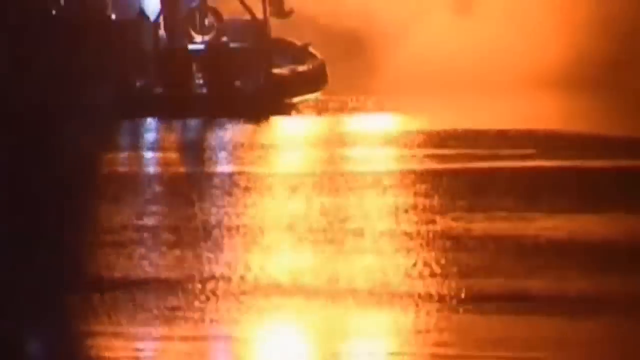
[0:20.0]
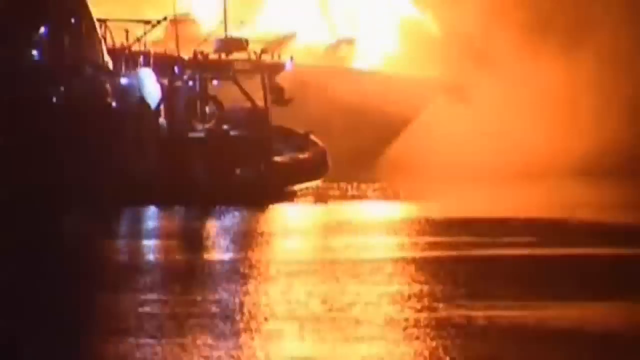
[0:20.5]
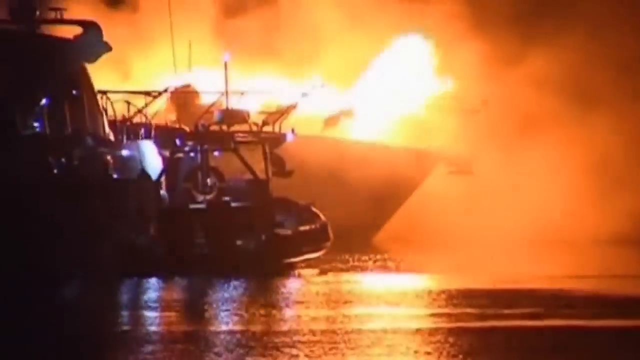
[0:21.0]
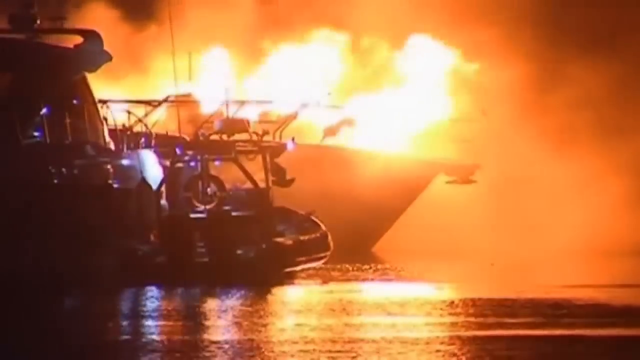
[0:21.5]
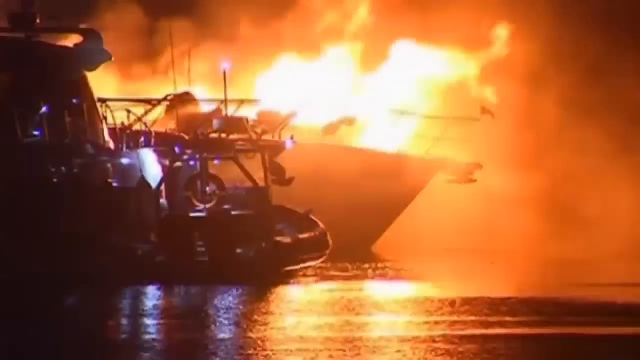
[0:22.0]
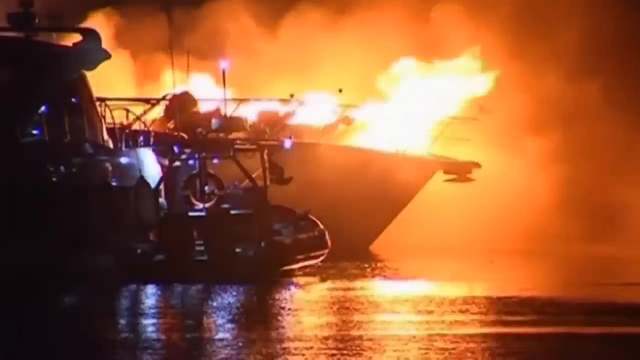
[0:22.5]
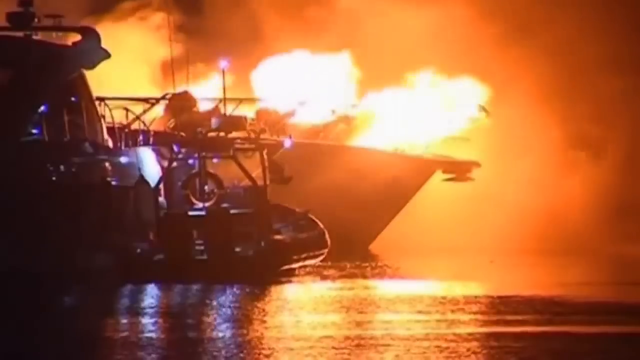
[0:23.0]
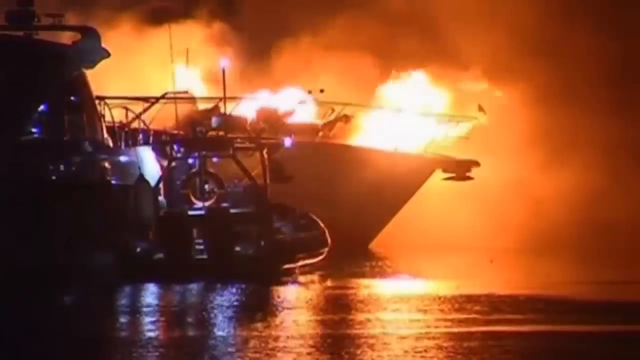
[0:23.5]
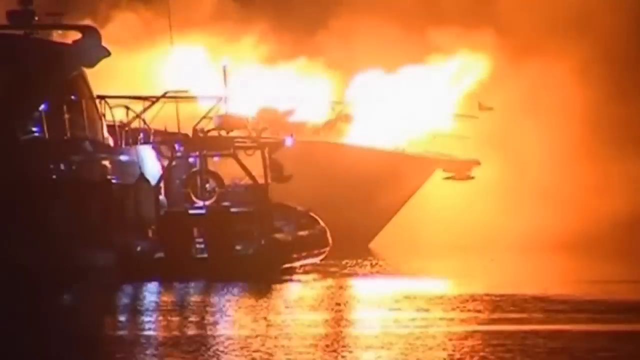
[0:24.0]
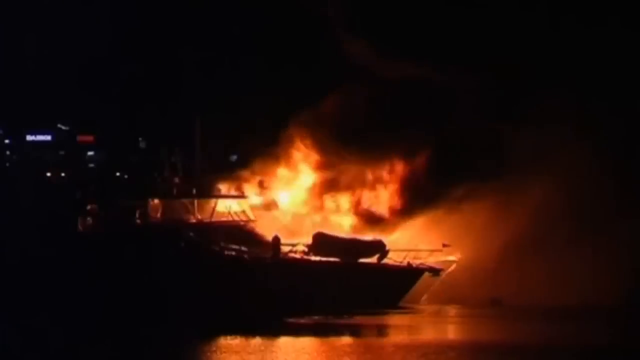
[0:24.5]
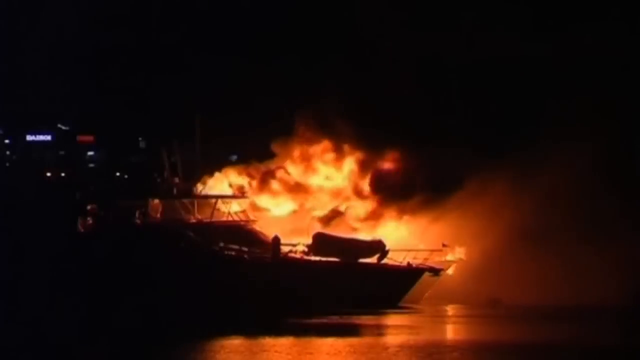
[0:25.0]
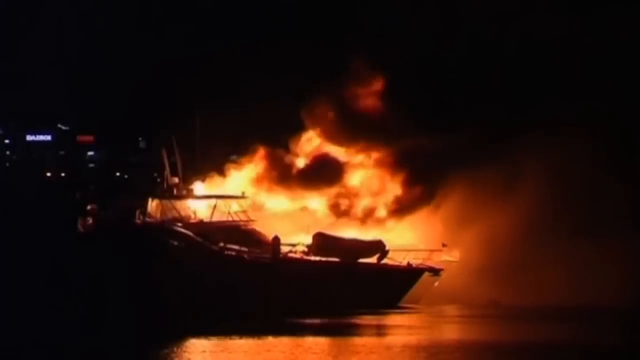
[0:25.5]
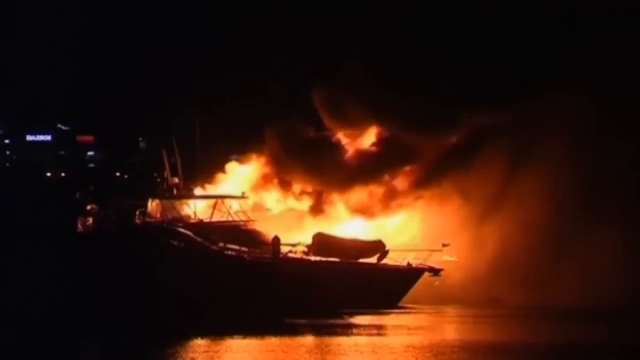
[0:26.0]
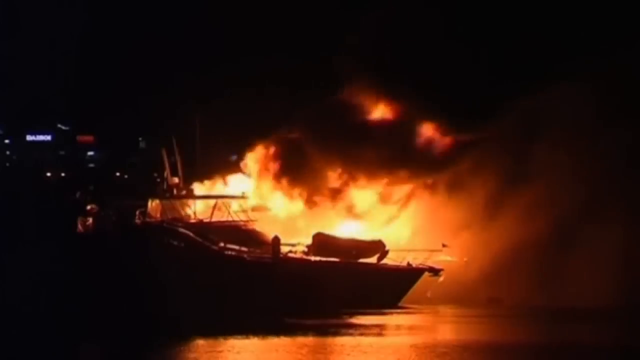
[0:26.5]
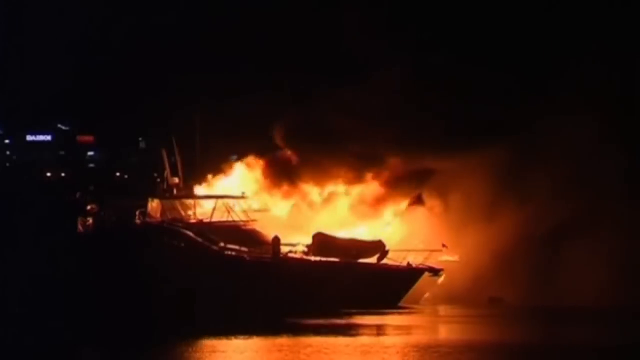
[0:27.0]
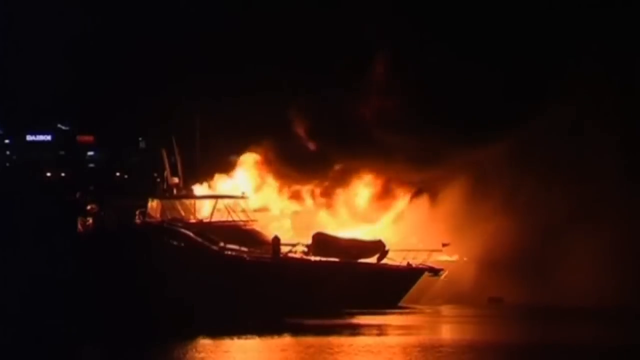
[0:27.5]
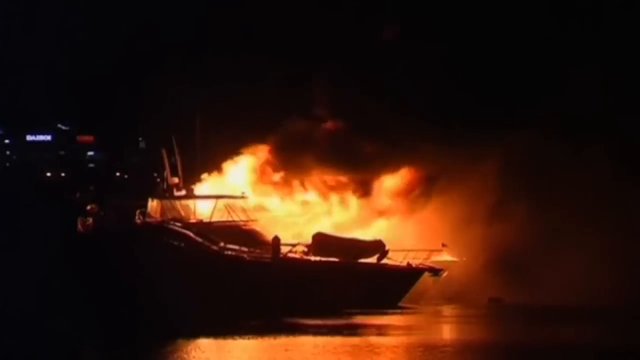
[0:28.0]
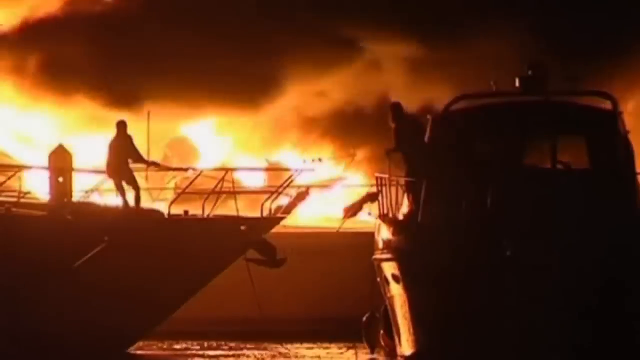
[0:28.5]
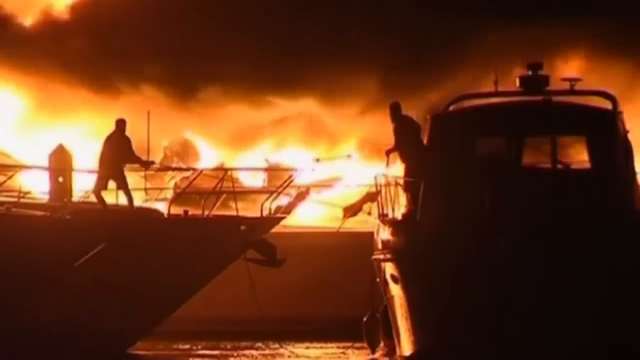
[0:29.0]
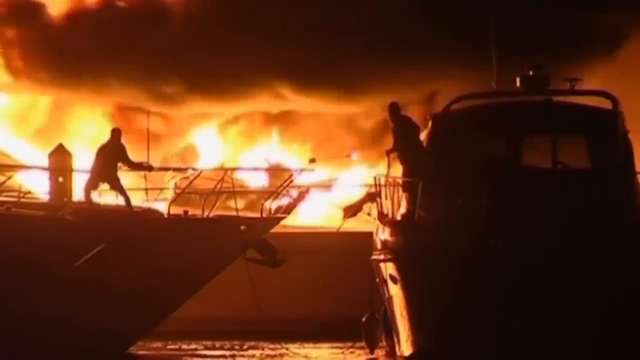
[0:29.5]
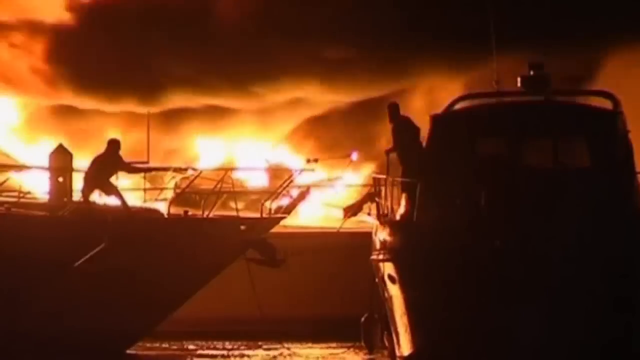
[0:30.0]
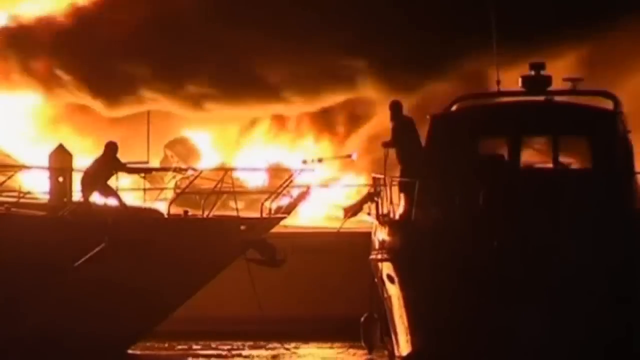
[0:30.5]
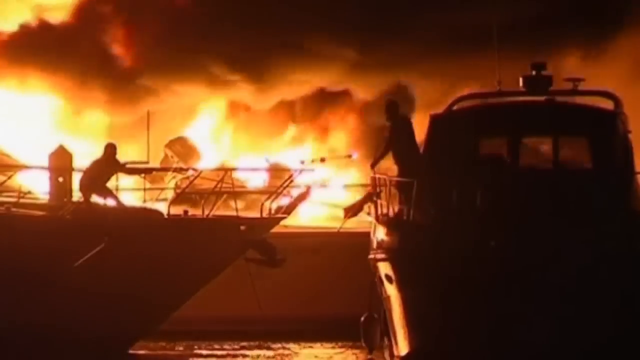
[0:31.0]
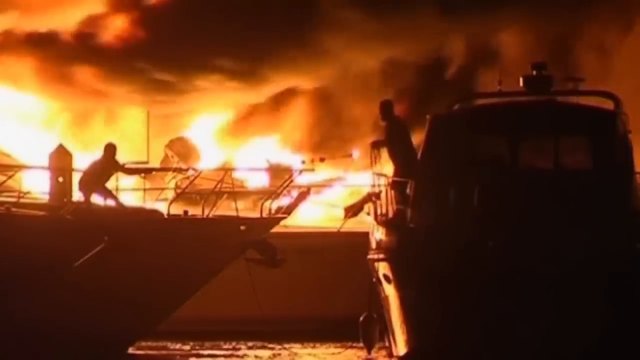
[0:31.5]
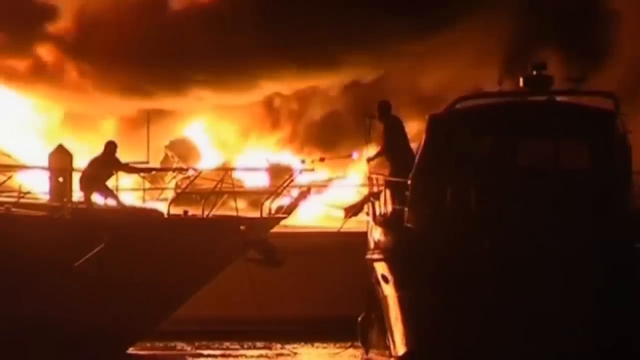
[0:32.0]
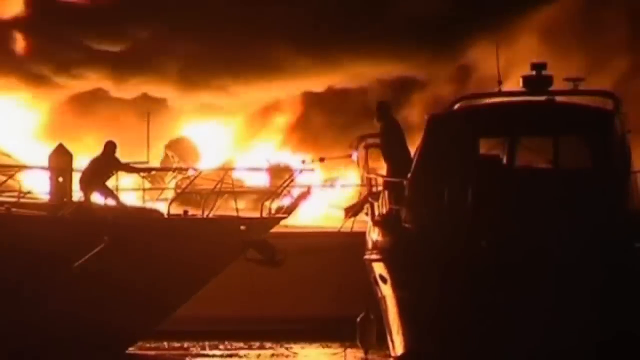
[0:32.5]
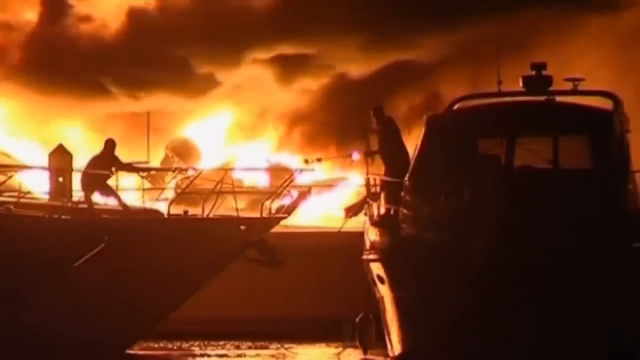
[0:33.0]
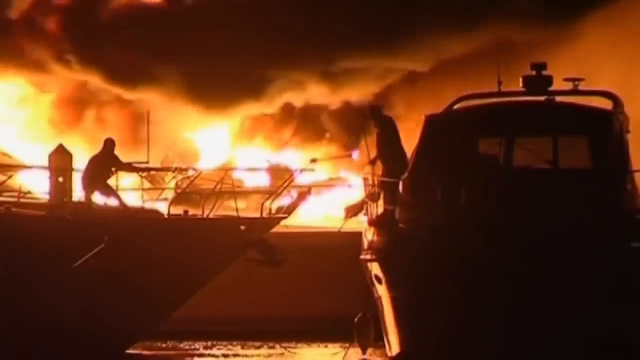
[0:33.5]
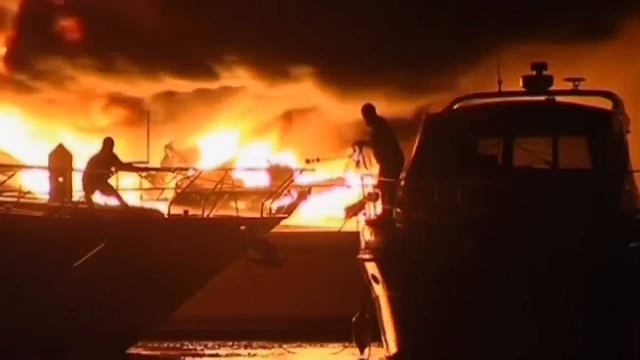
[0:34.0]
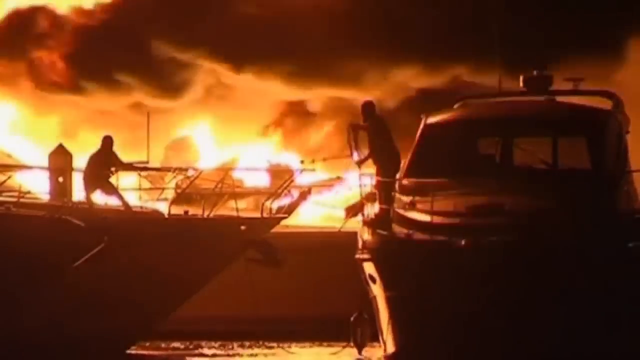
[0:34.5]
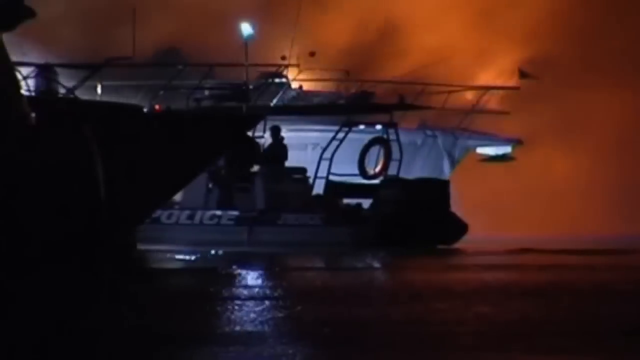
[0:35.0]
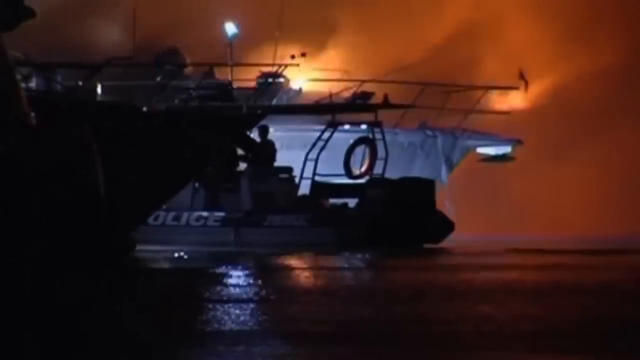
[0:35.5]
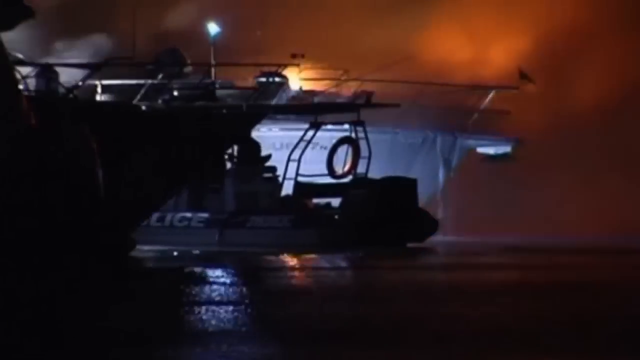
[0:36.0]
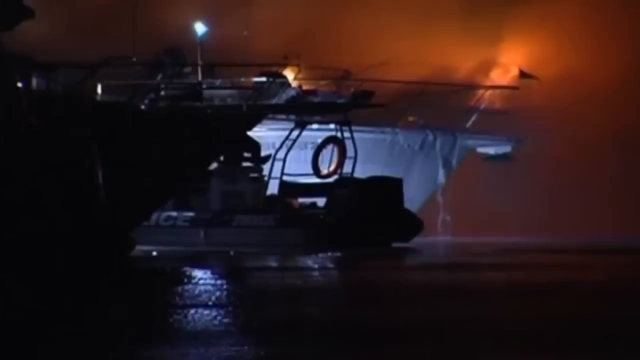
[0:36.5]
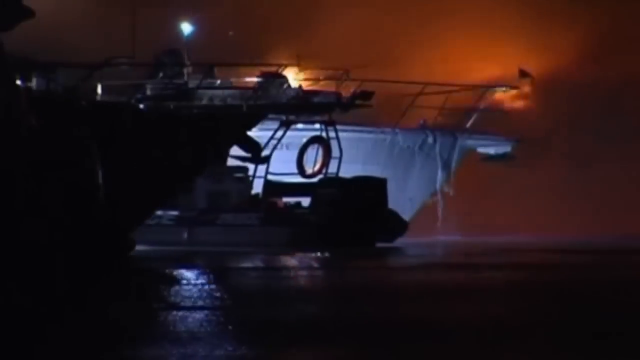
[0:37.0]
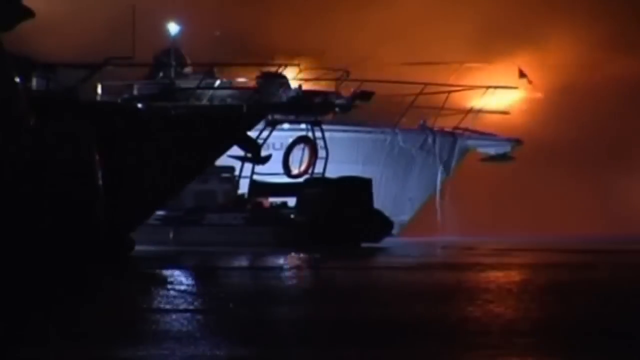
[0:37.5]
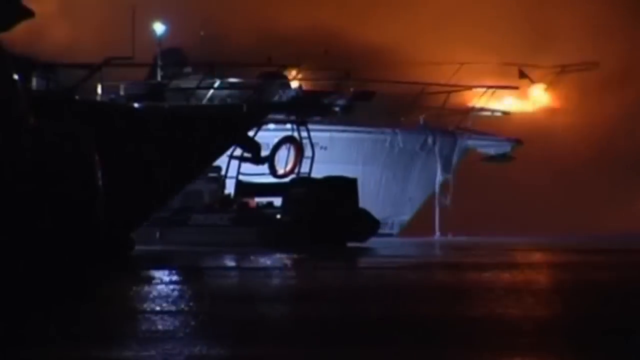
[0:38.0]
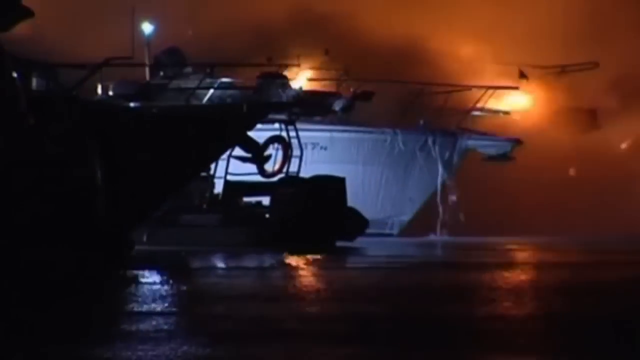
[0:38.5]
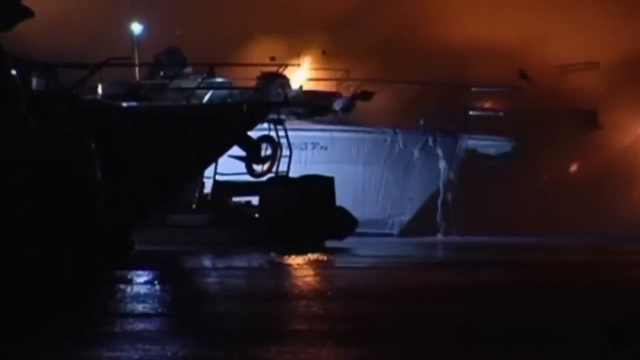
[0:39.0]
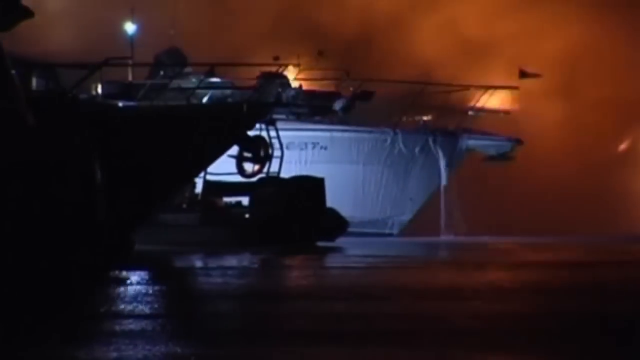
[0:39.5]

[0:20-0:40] The fire is reflected in the water, and as the camera pans up, boats on the water come into view; since it is dark, only their silhouettes are visible. The boat in the background is on fire, with flames all over its top that are white-yellow, and it glows orange. Smoke moves from left to right. The camera pans out to a wider shot, showing a completely black background with smoke kind of moving from left to right. Another angle then shows two boats in front of the burning boat with people on them. The person on the left seems to be holding on to the rail, while the person on the right seems to be grabbing a rope as their boat continues to move slowly to the left. A police boat then passes between the burning boat and another boat in the foreground.